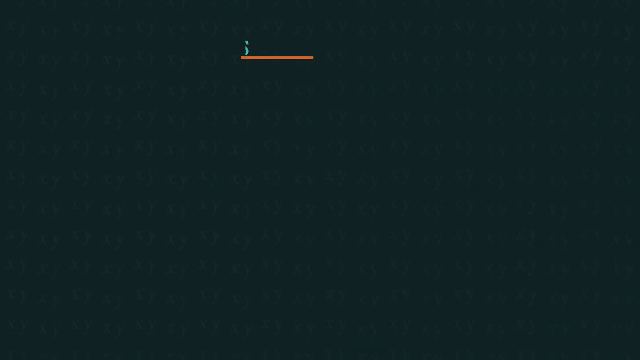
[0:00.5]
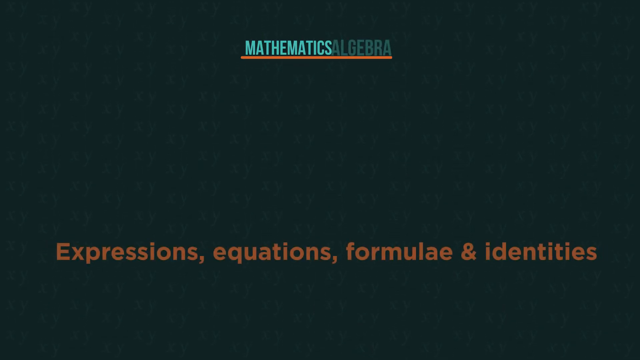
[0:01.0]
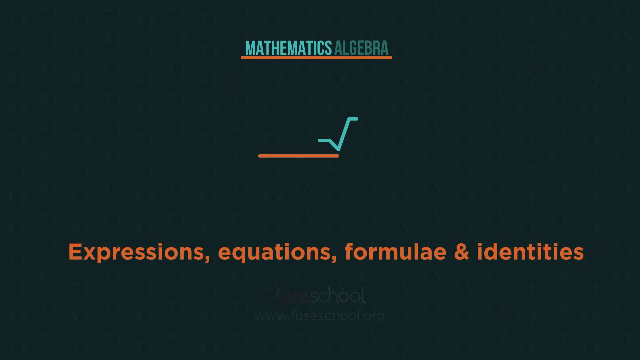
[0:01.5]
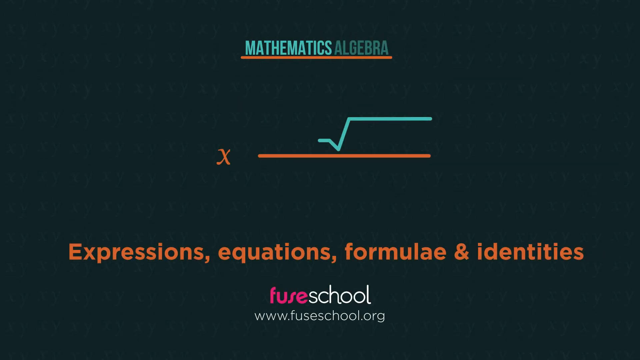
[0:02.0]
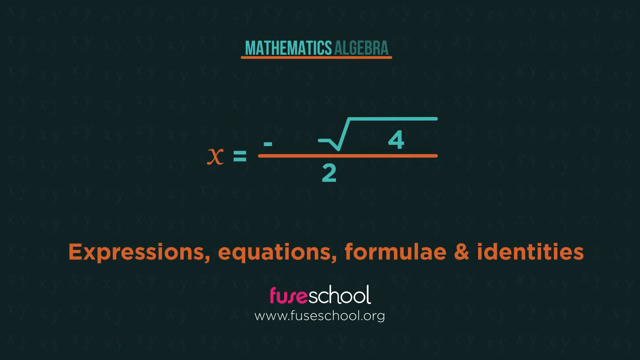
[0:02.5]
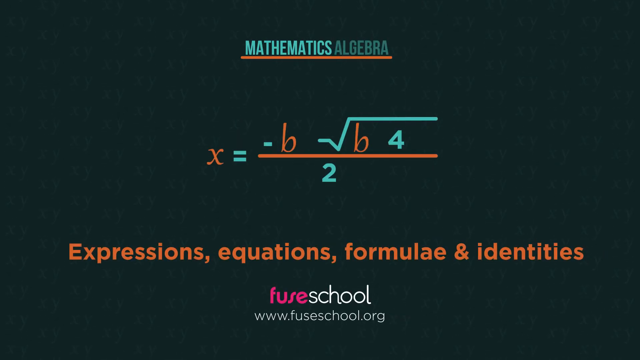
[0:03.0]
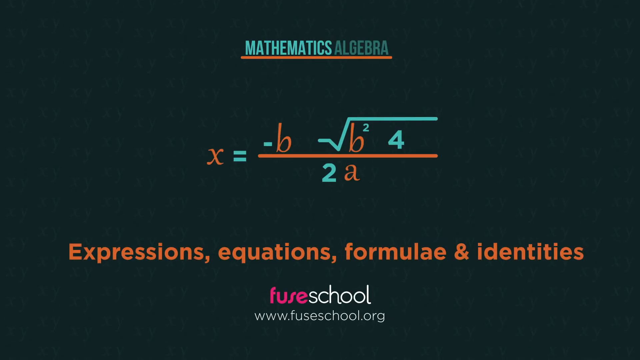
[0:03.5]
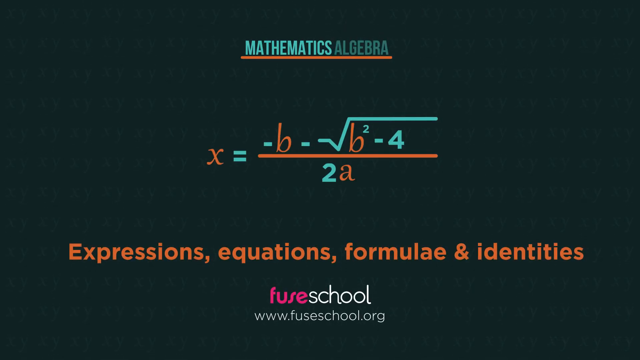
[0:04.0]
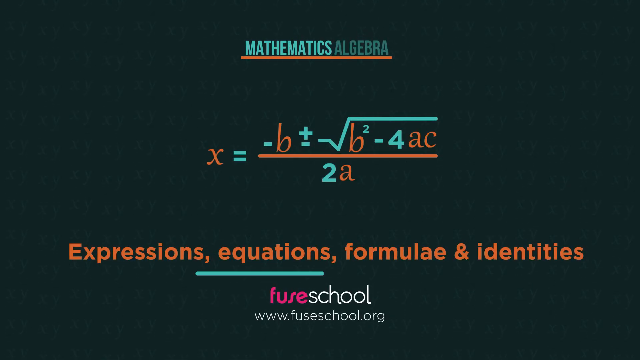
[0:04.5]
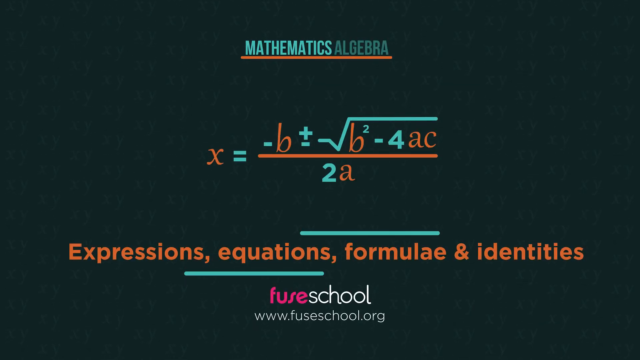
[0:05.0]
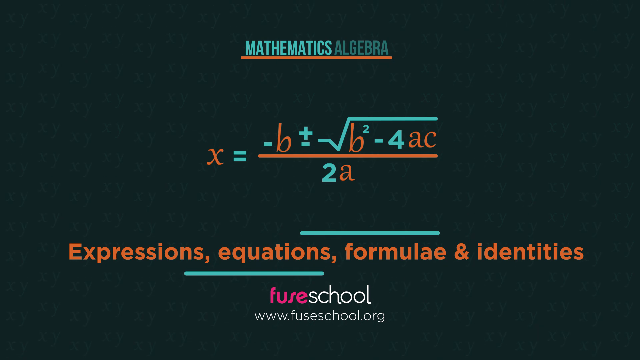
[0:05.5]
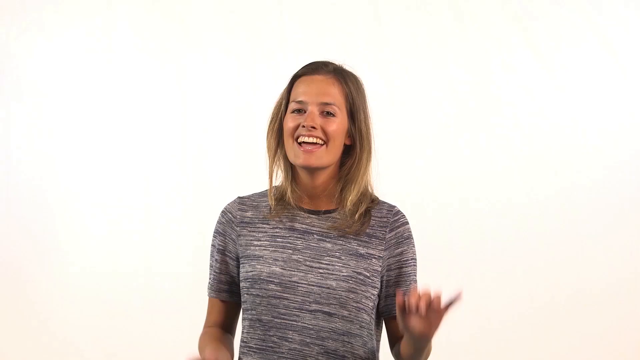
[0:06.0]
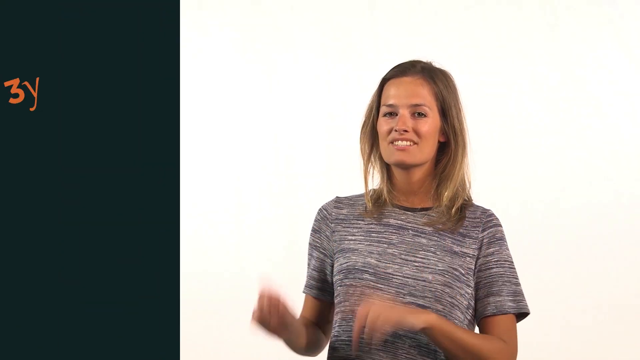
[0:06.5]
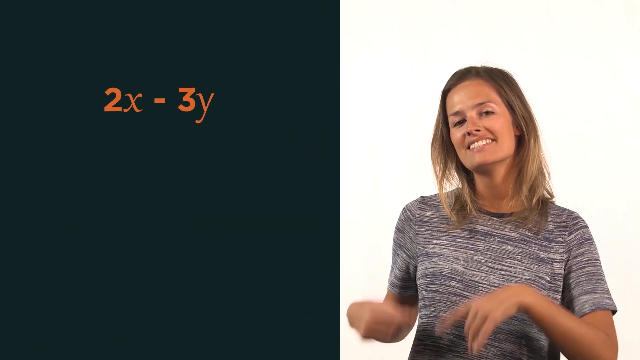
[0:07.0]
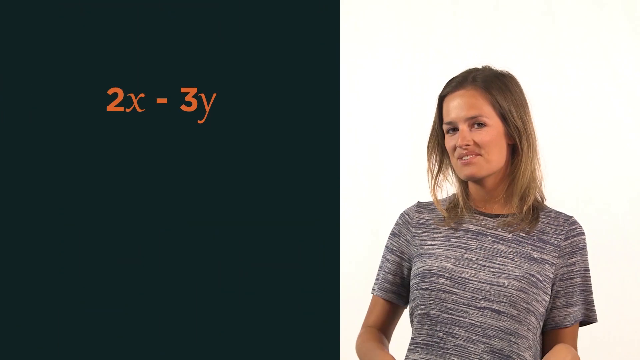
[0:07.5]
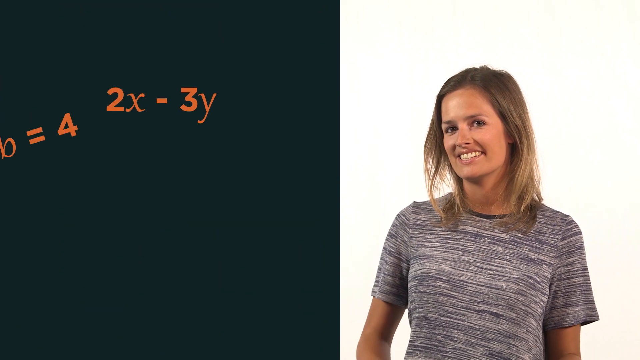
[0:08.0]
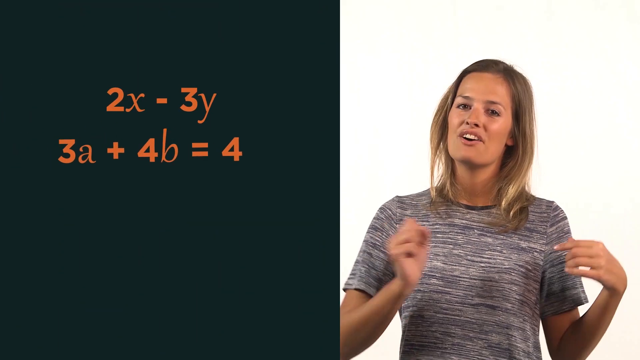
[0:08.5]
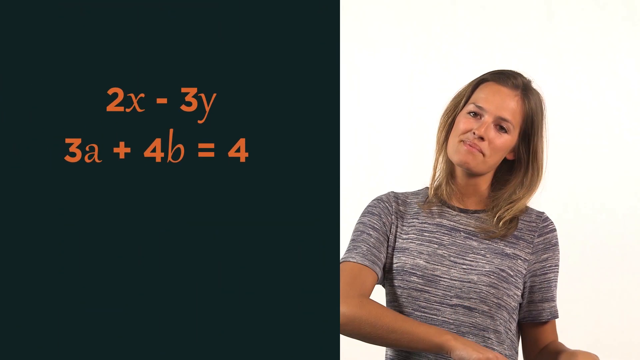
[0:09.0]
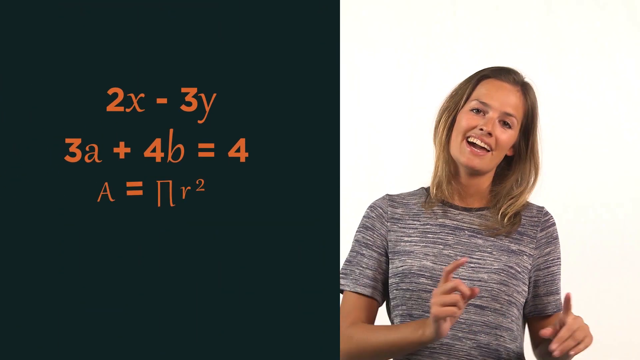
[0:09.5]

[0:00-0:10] A title screen reads "Mathematics Algebra" with an orange underline, and the text "expressions, equations, formulae, and identities" appears. The screen slides on to "2x minus 3y" while a white woman, apparently the teacher, appears to be speaking about the equation. The video appears to be by Fuse School, with the website "www.fuseschool.org" at the bottom. The screen then slides to the white woman with more equations on the left-hand side; she looks like she is talking before the screen cuts to black.